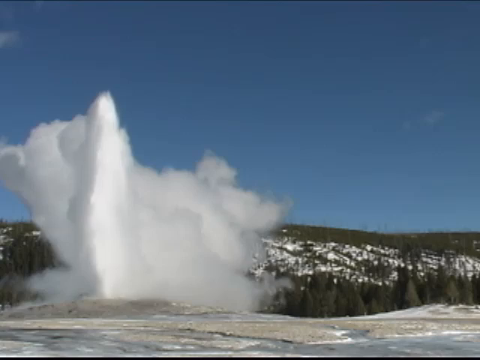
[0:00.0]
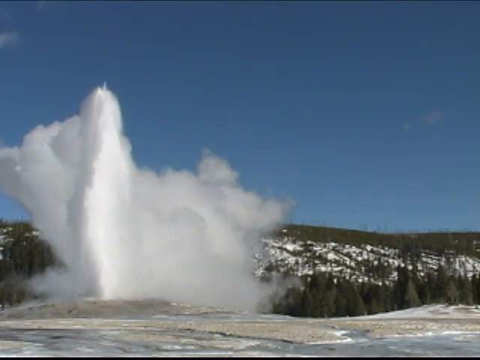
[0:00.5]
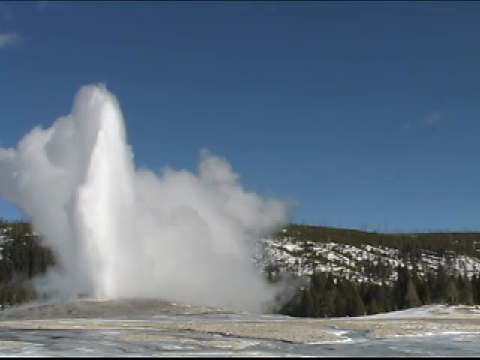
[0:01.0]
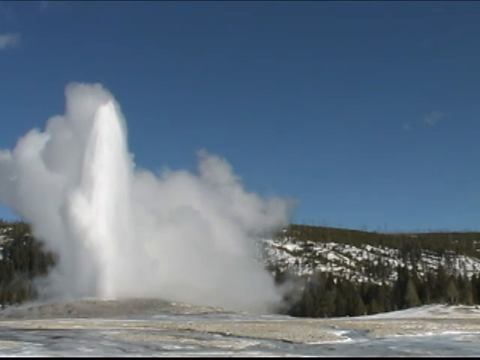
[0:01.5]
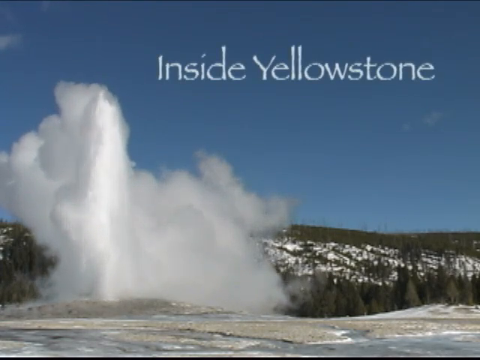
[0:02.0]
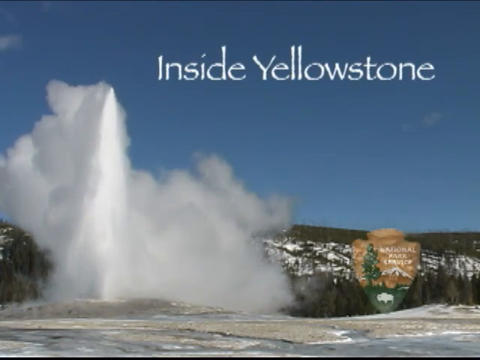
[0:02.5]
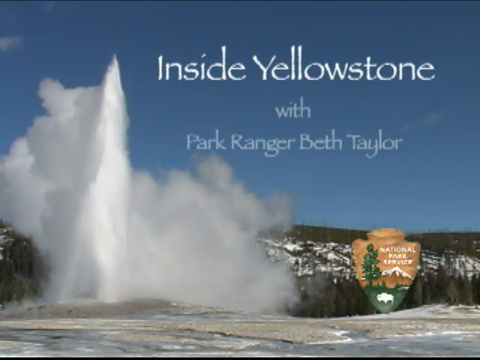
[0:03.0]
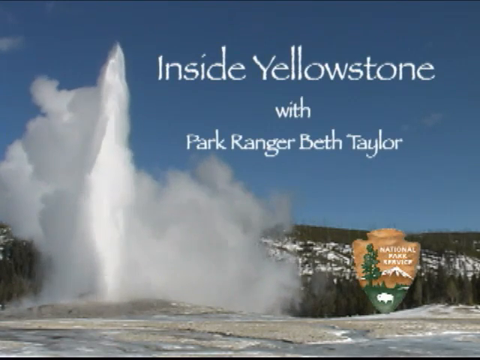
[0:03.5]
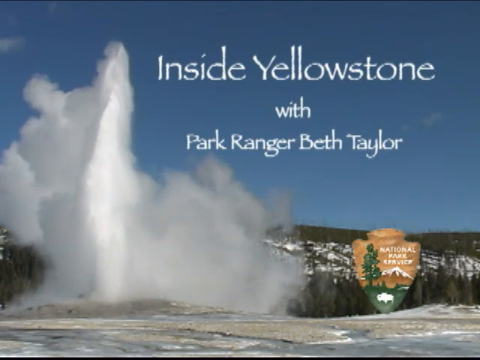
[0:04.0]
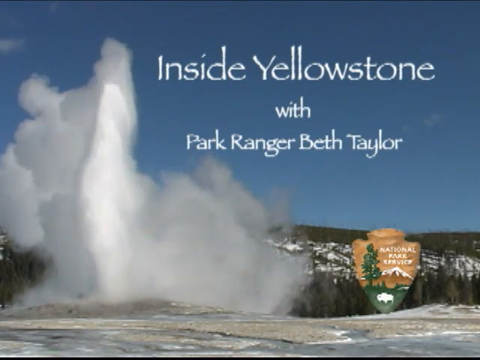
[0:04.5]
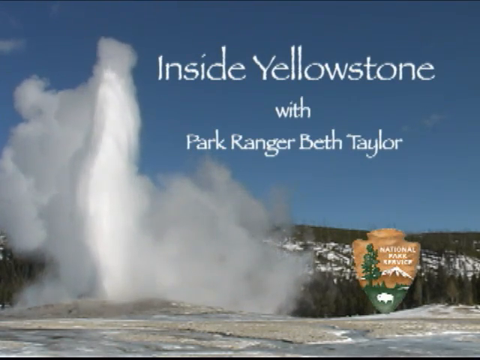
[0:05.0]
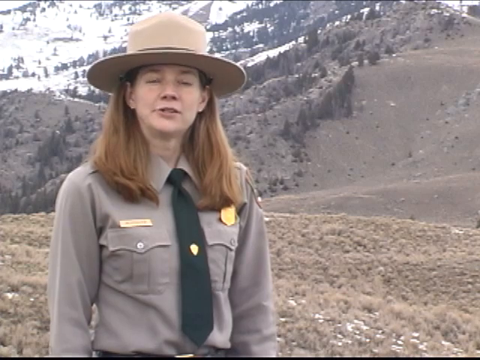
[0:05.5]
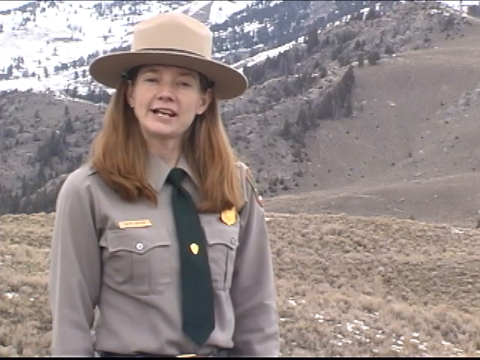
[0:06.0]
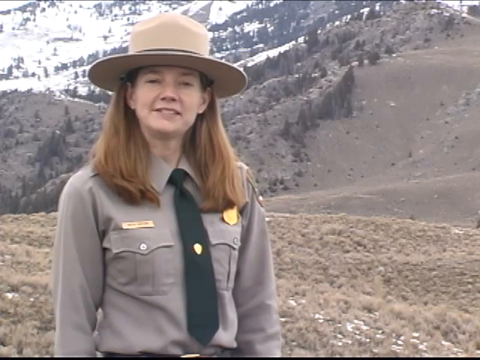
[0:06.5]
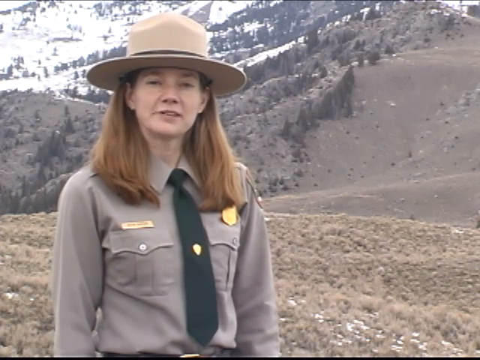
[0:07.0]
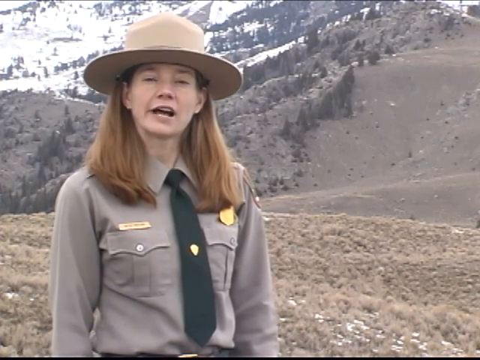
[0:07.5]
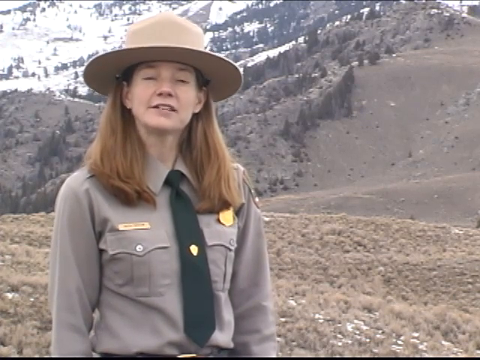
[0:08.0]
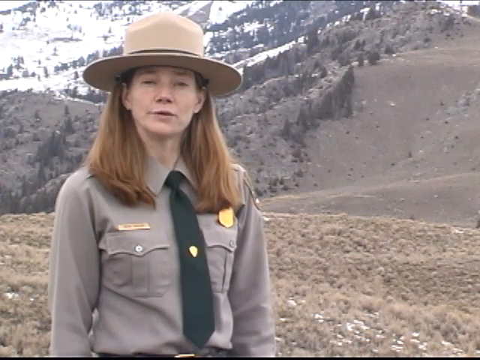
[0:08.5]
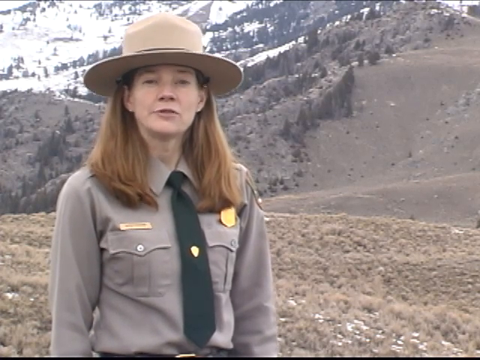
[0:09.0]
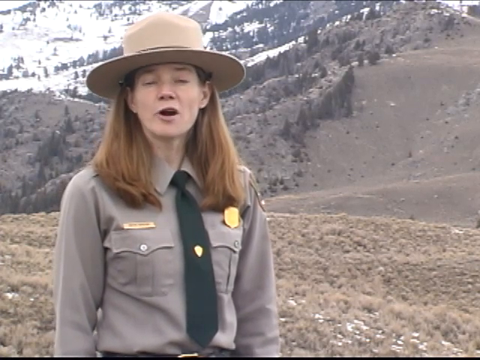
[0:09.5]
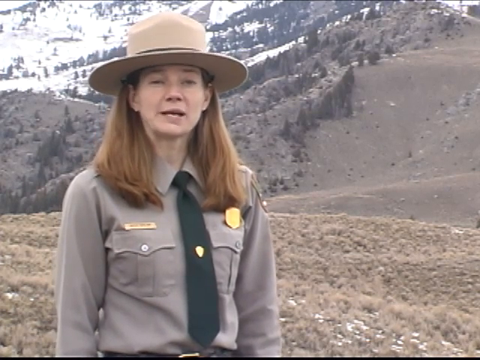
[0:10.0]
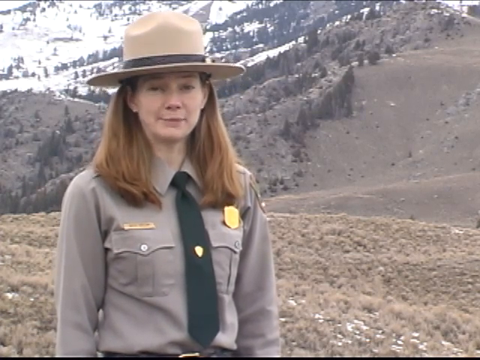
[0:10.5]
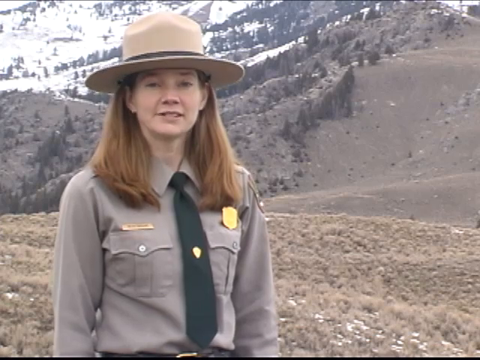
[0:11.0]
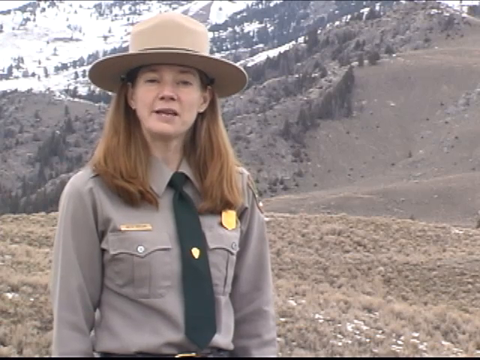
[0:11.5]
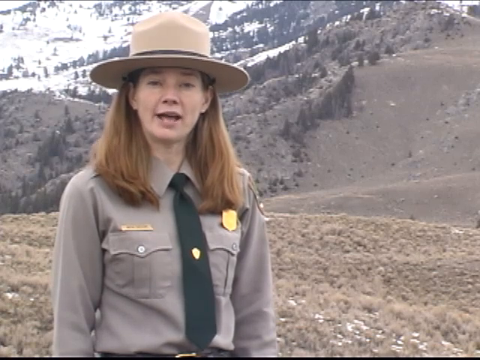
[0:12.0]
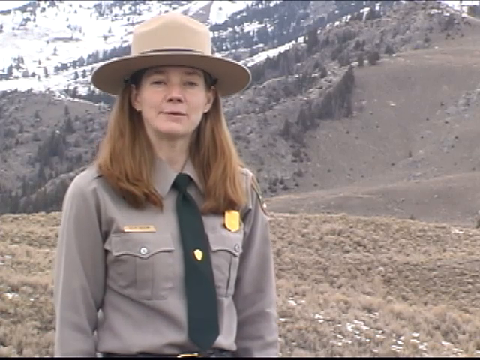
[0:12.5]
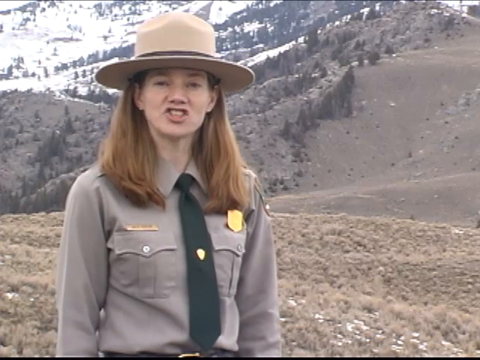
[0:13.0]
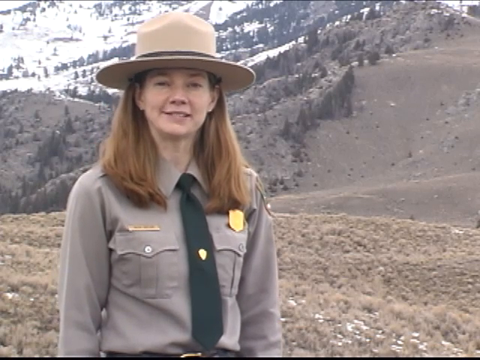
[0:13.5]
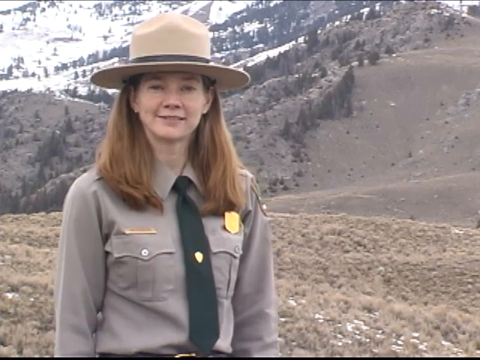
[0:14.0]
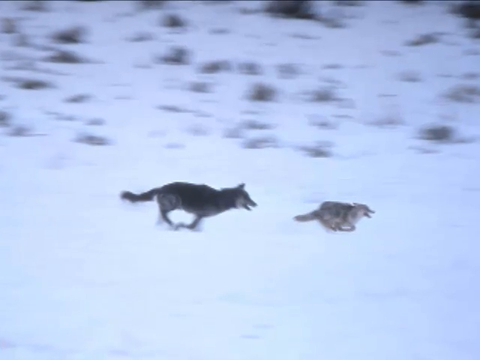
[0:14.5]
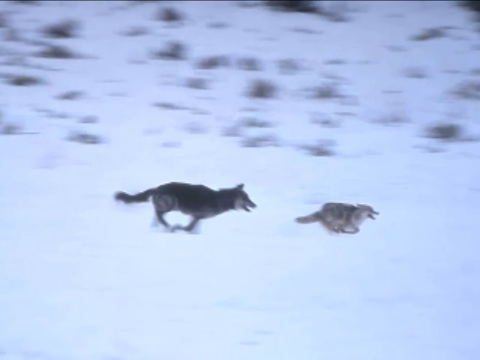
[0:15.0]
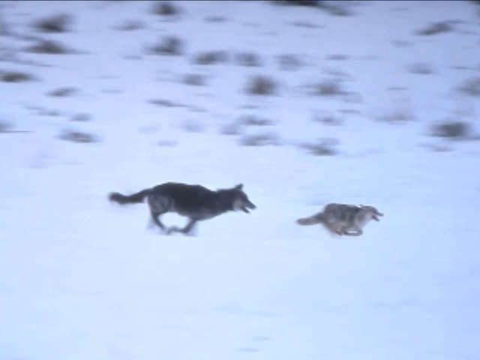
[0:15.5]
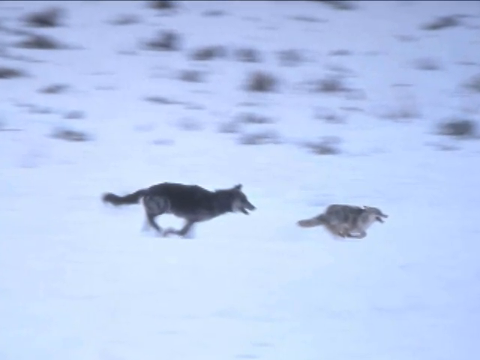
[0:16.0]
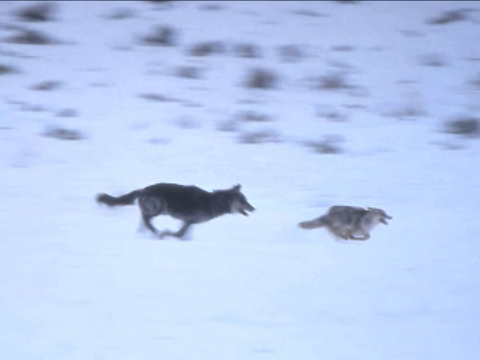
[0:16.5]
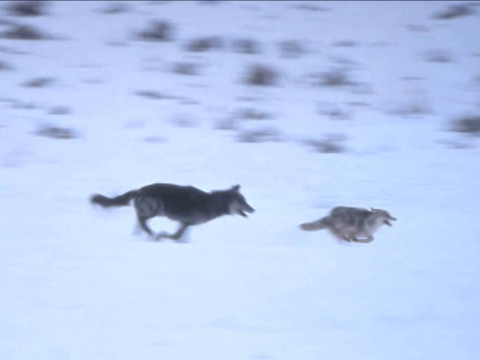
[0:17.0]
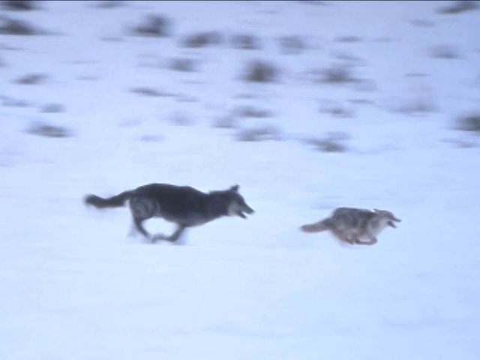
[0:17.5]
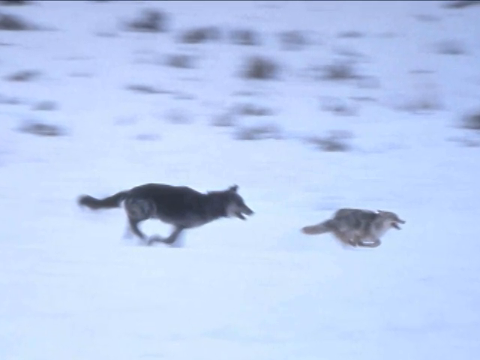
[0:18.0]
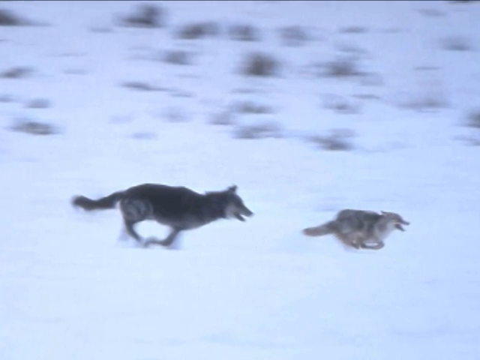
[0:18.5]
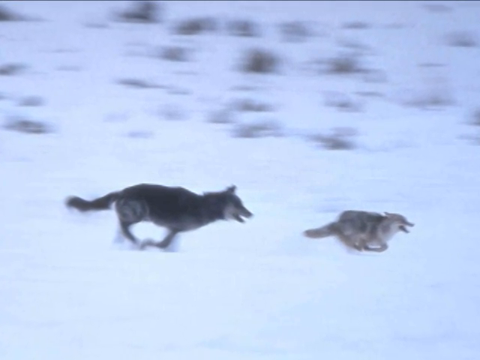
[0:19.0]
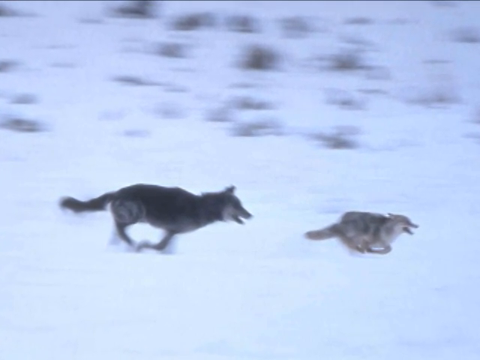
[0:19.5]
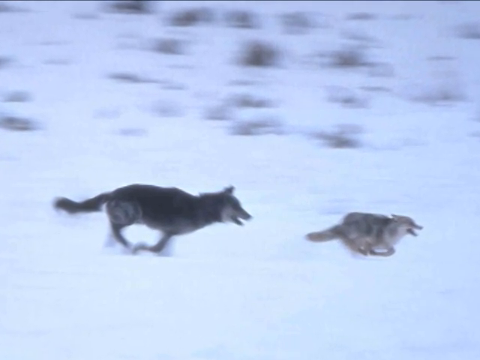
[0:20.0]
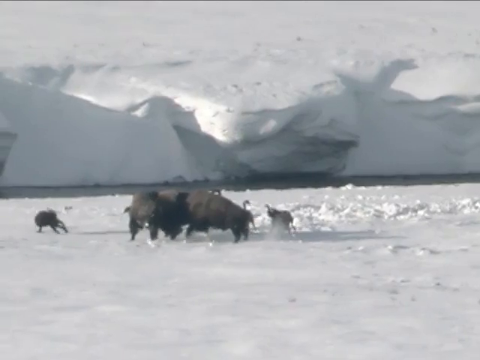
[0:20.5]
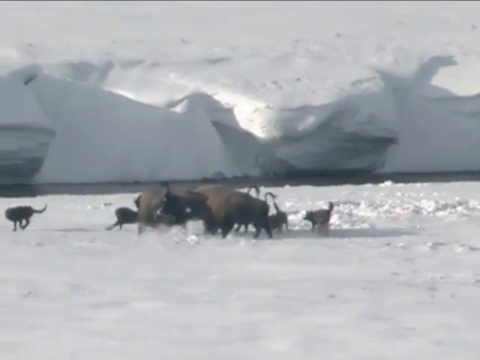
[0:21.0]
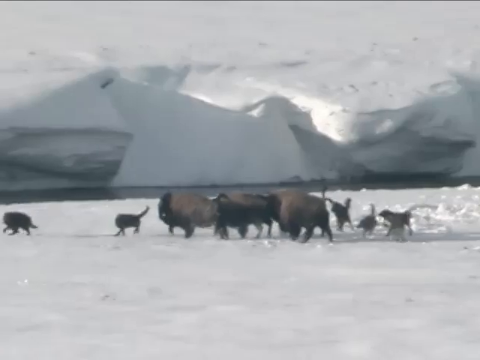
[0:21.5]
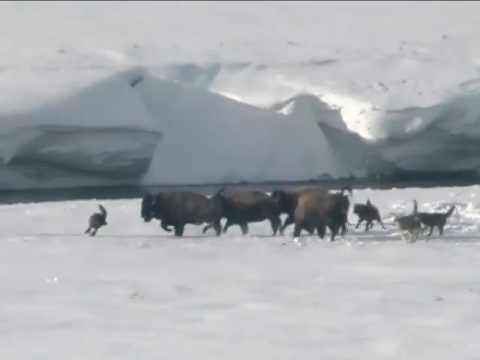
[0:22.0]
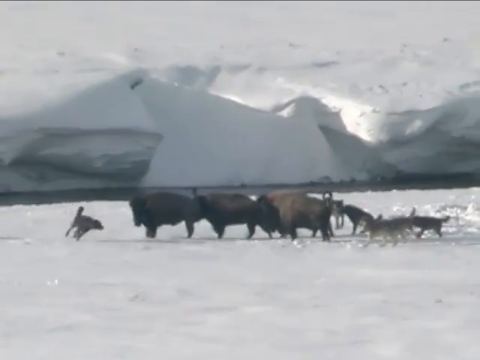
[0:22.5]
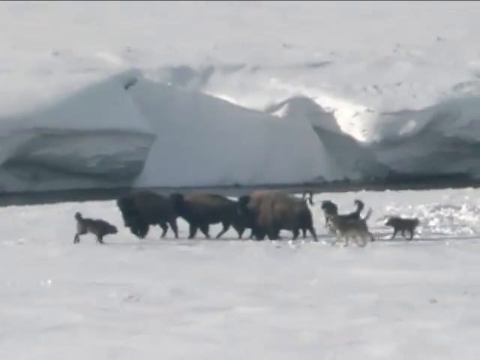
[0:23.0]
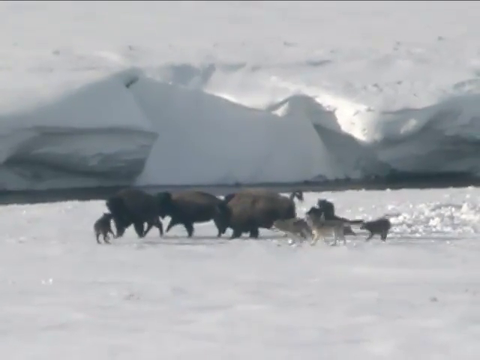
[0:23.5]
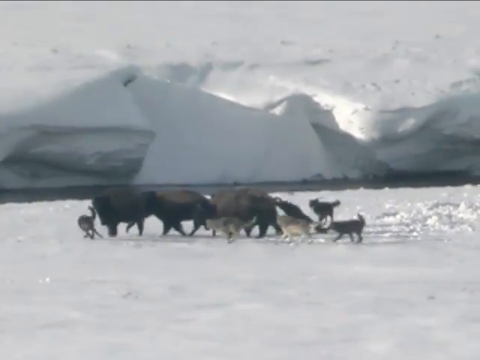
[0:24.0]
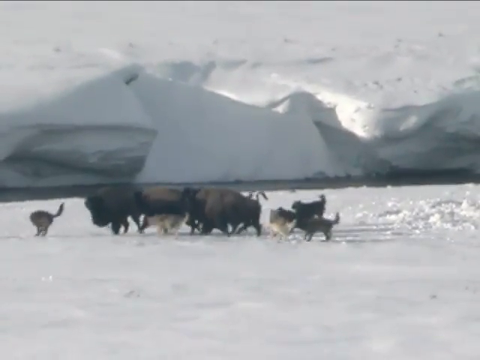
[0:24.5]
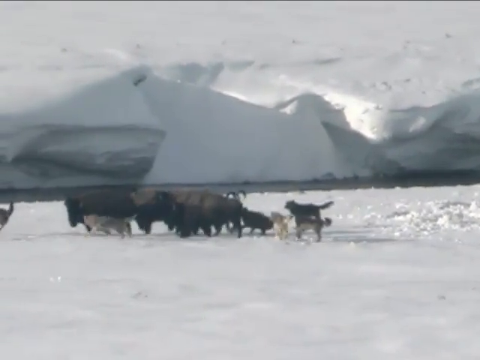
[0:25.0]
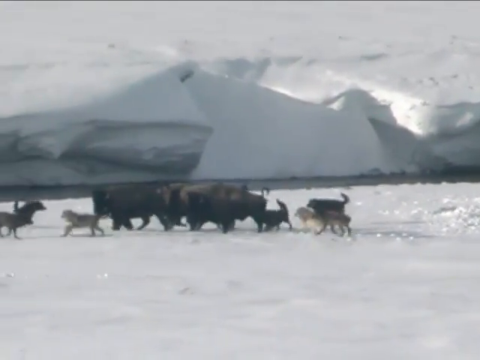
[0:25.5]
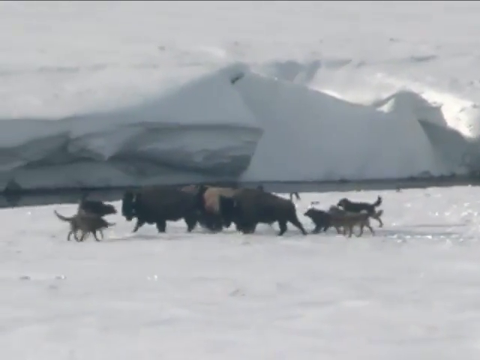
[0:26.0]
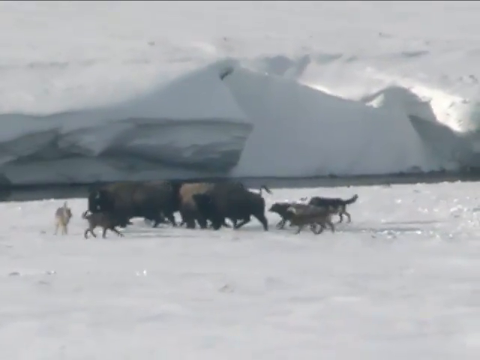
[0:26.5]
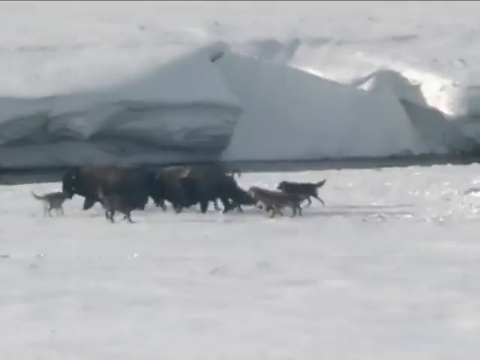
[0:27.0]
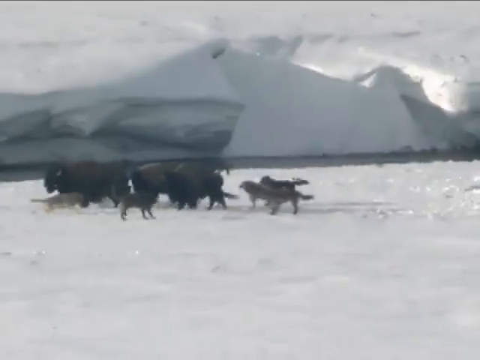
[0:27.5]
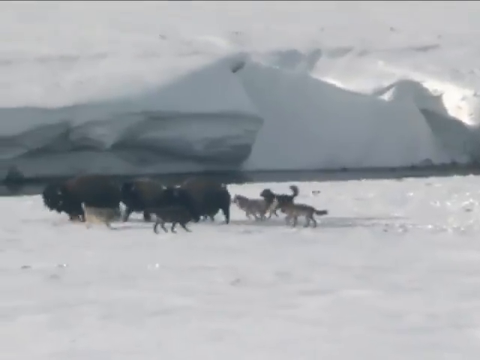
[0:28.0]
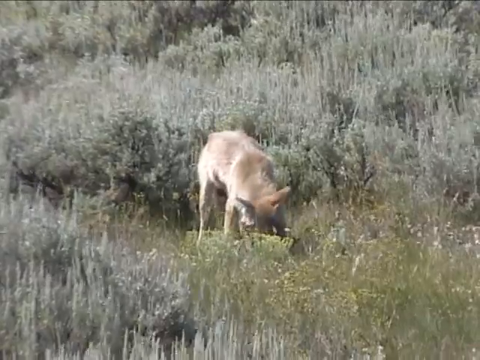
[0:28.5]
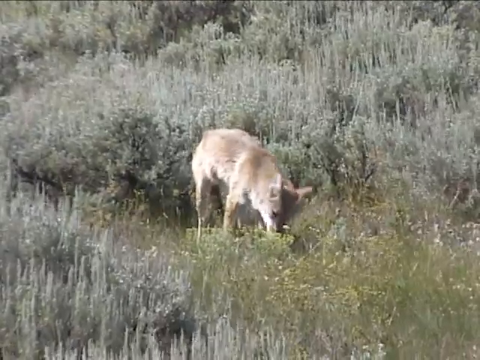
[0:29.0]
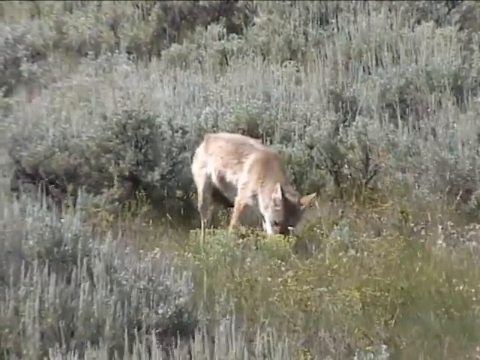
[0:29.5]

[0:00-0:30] A geyser goes off on the left side of the screen, and the background seems to be Yellowstone National Park. White letters across the top read "Inside Yellowstone with park ranger Beth Taylor." In the bottom right corner is the National Park Services logo, an upside-down arrowhead with a park graphic on it. The image is replaced by what seems to be Beth Taylor standing in her park ranger uniform: a full brown hat, a green tie and a khaki button-up shirt. A shield is visible off to the right and her name tag to the left. She is standing in an open field in Yellowstone National Park, talking to the camera. Next, two coyotes run through a snowy scene, followed by about three bison surrounded by 10 coyotes that seem to be attacking them in the snow. The section ends with a coyote eating in a field.